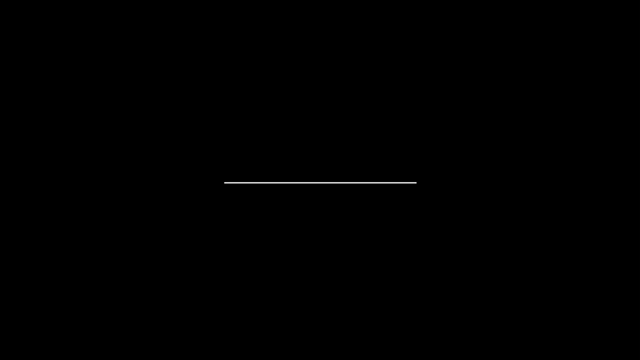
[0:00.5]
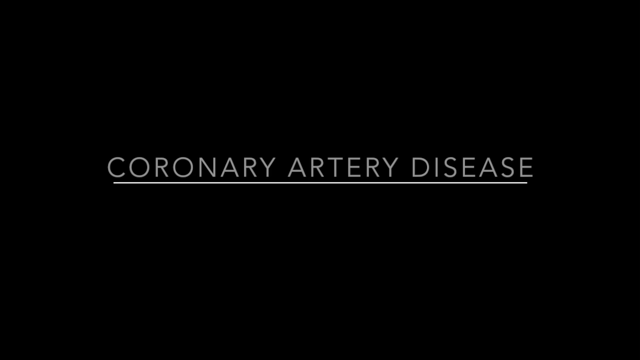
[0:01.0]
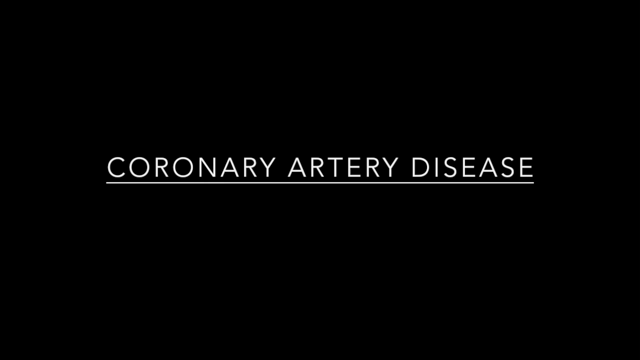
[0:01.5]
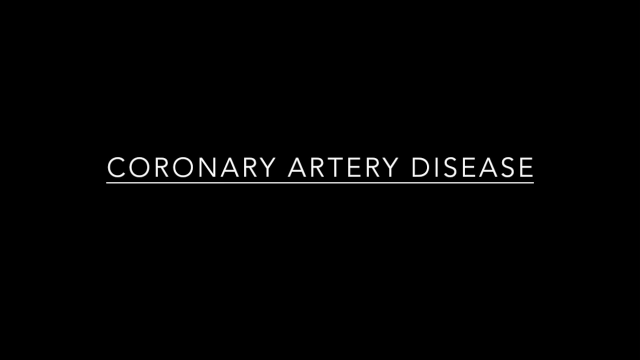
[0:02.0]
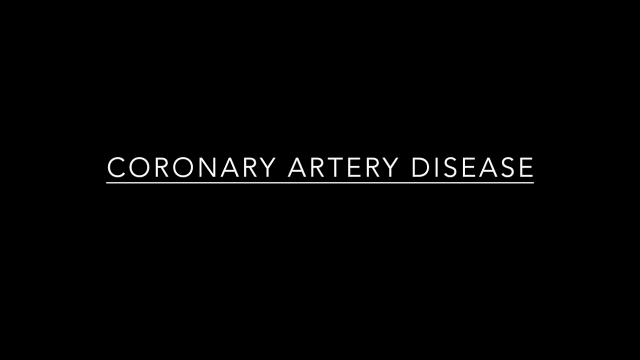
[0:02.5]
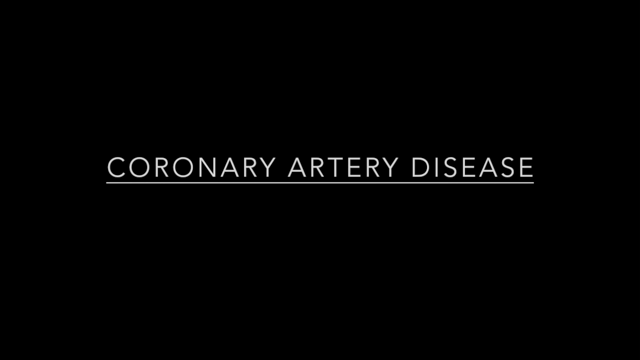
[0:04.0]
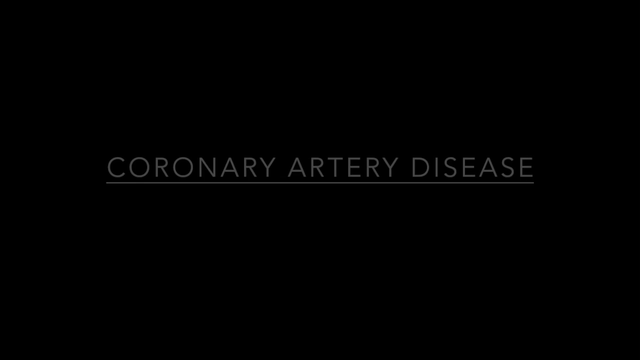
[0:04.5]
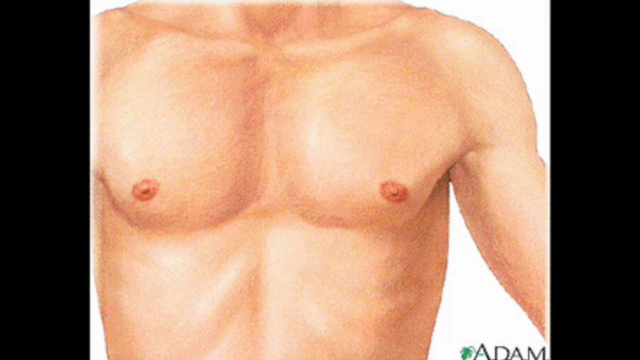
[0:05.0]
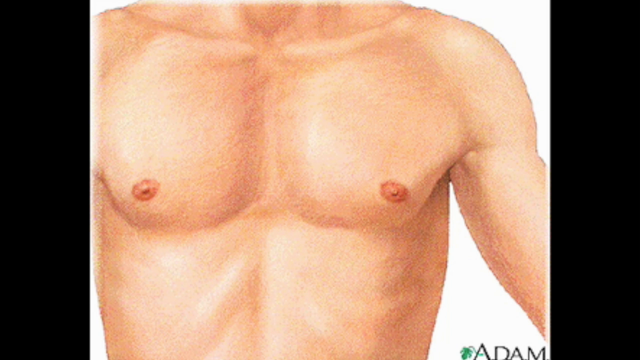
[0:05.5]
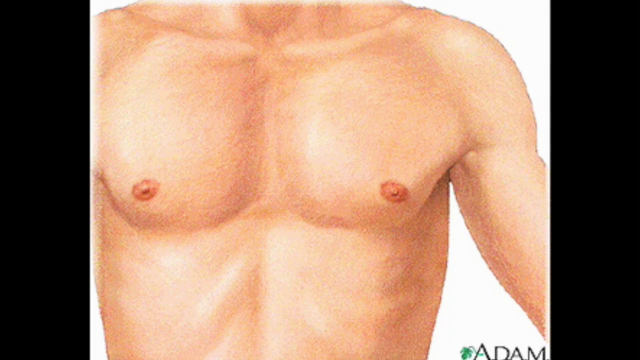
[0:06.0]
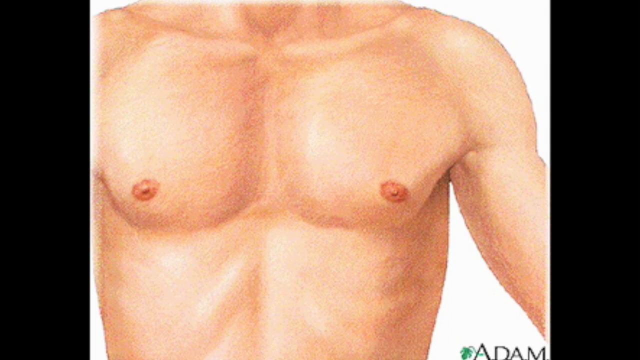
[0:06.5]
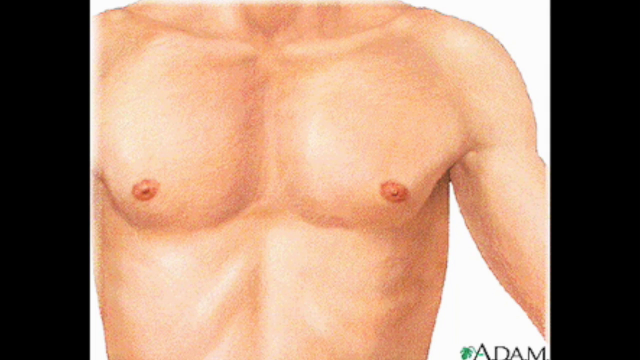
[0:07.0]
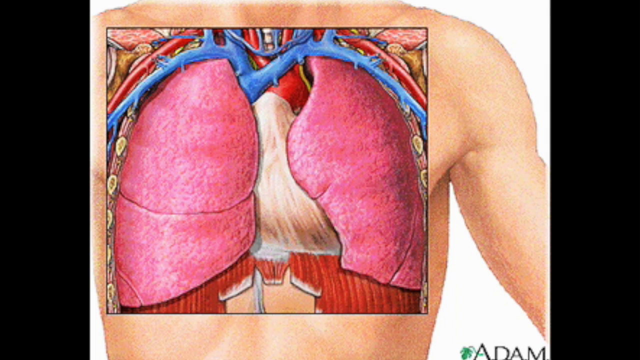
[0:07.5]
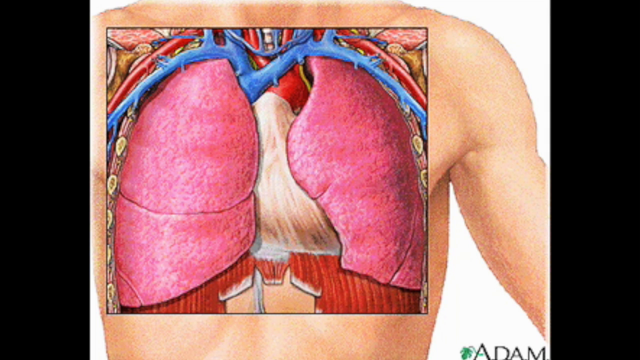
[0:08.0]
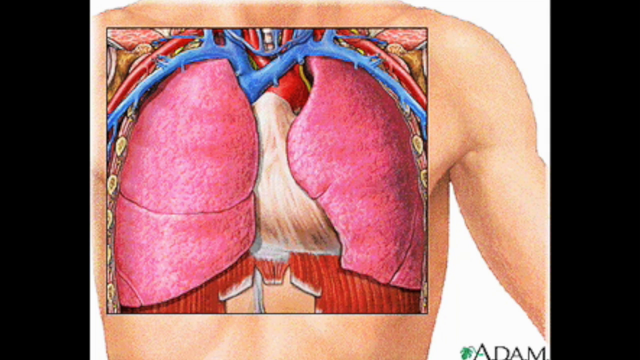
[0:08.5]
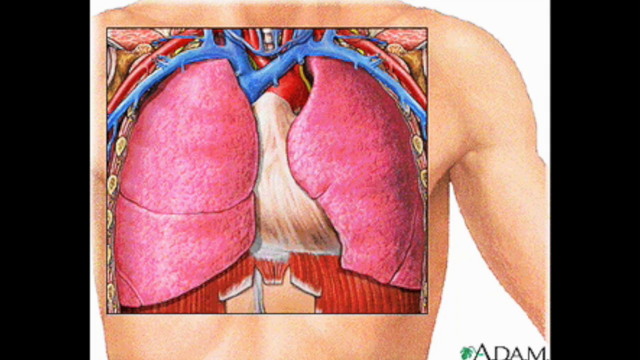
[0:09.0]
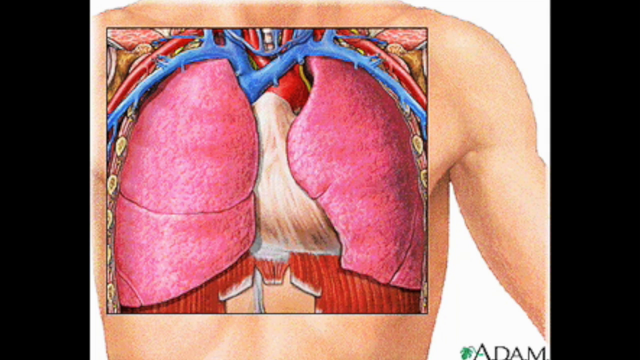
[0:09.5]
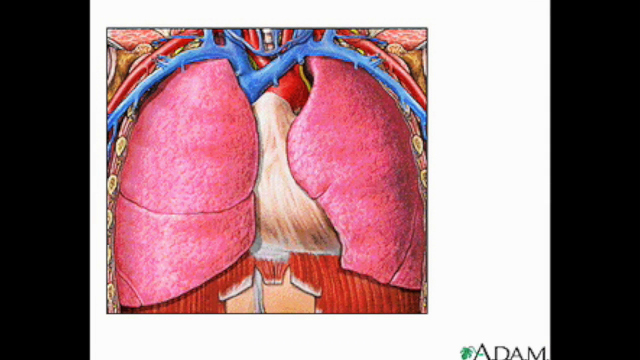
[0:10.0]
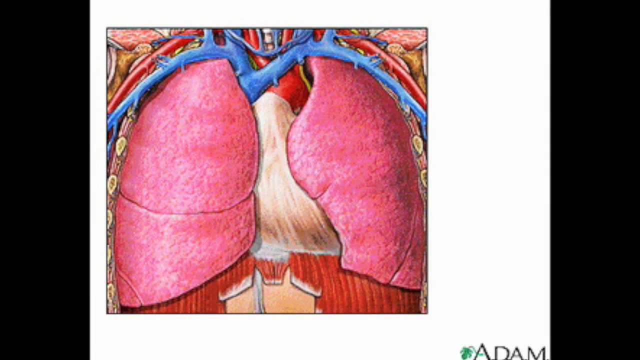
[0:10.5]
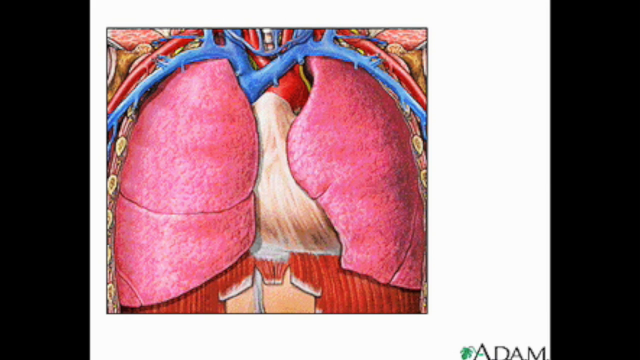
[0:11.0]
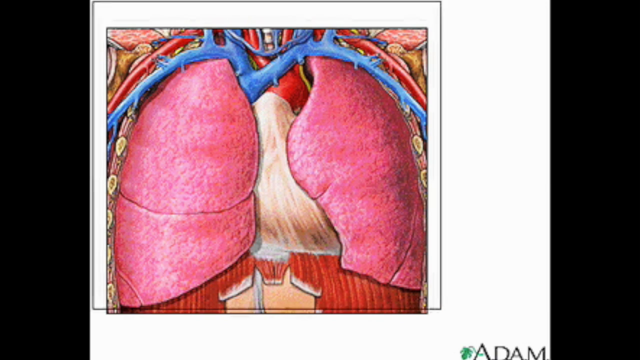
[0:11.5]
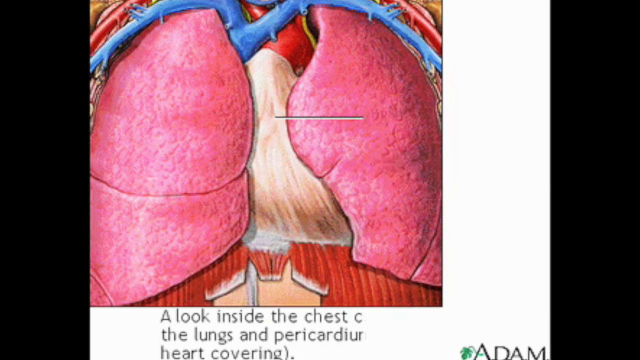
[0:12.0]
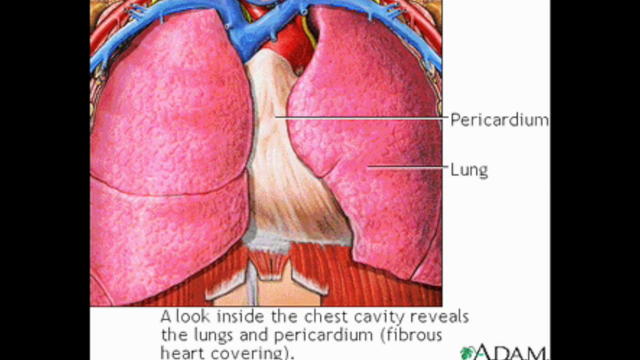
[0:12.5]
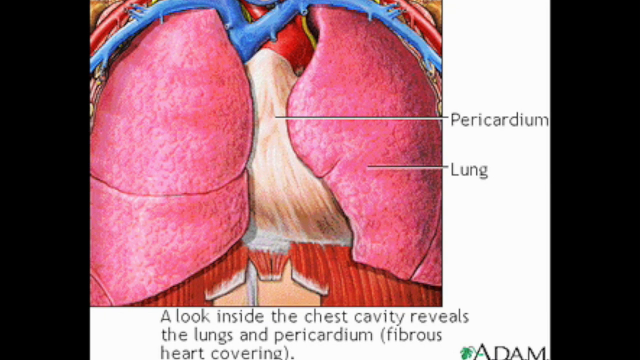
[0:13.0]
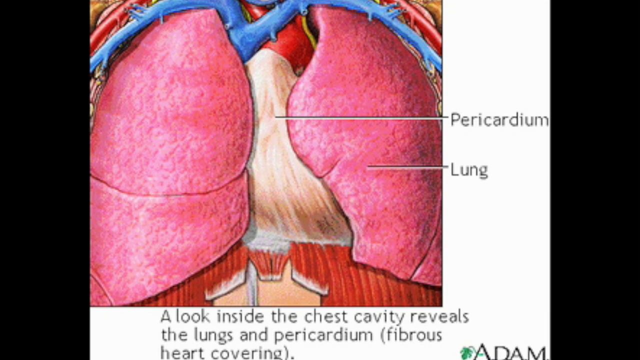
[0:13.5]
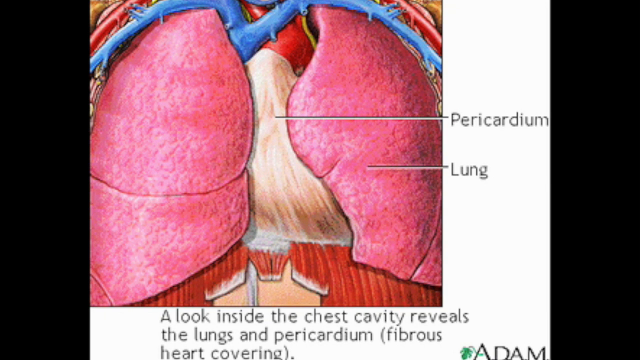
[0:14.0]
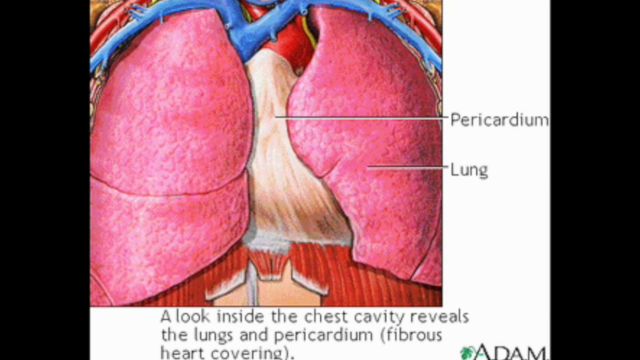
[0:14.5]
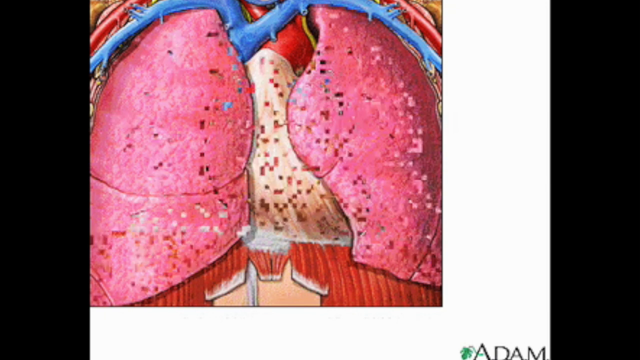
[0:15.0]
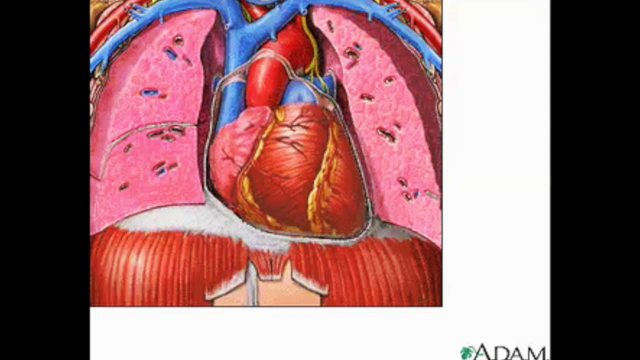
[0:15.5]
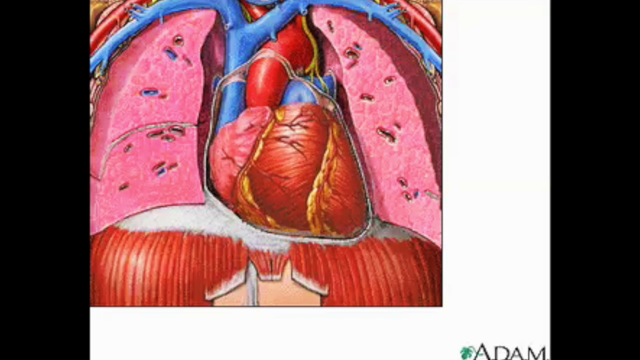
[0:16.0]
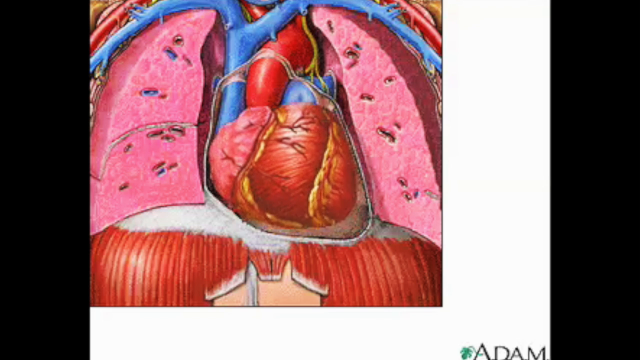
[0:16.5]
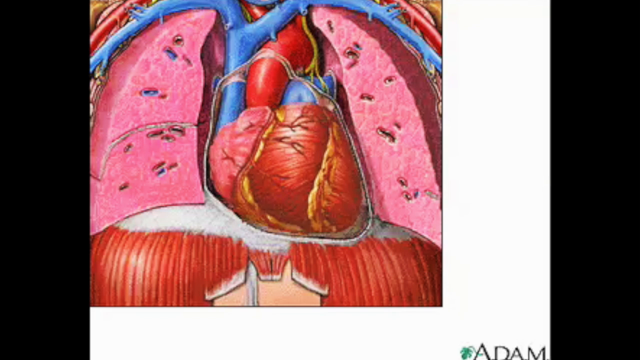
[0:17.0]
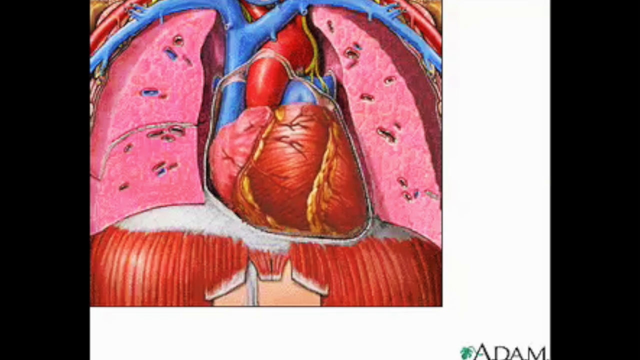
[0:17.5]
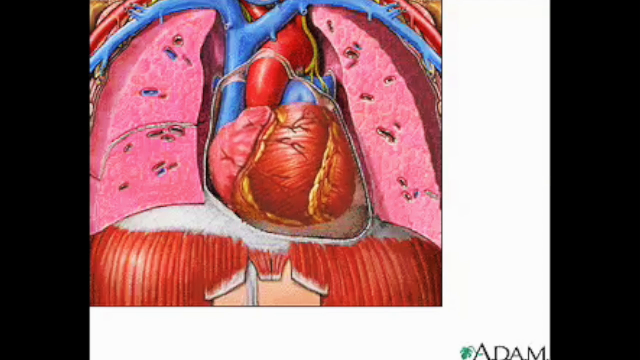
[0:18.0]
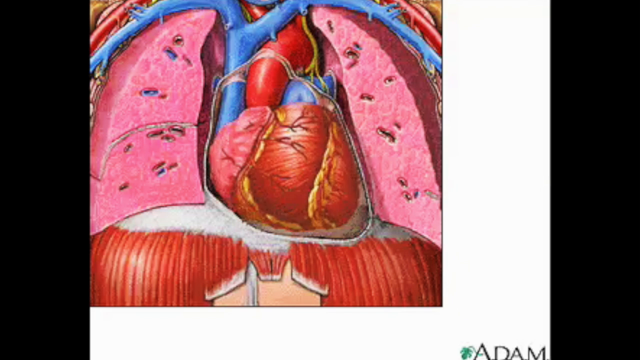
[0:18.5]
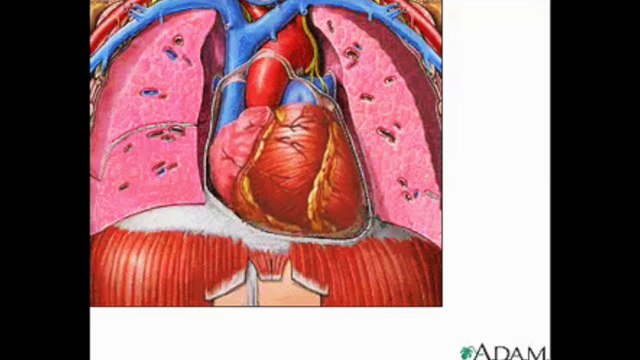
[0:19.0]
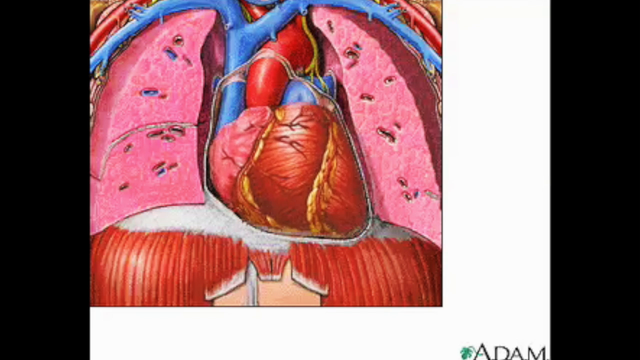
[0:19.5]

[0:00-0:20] The video opens on a black screen with animated white letters, apparently about heart disease, coronary heart disease. It then shows a generic picture of a man's torso against a white background, with the word "Adam" in the lower right-hand corner. An animation of the lungs and heart is overlaid on the torso: the lungs are pink and the covering of the heart is white. Underneath, the heart appears in dark red and light red, beating, along with other things near it, and some of the arteries and veins coming out of the heart are shown. The arteries seem to be red and the veins blue. The man's torso remains the background.